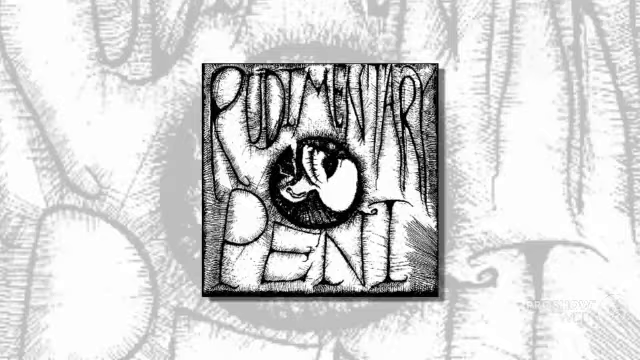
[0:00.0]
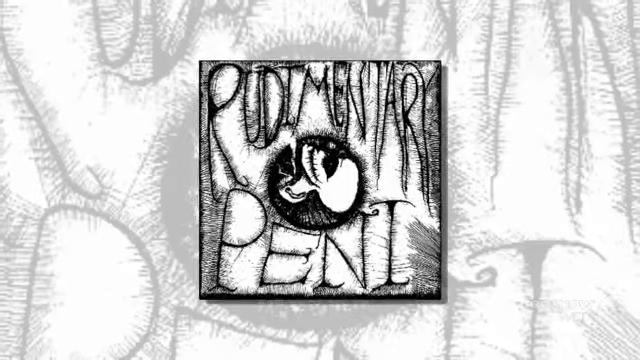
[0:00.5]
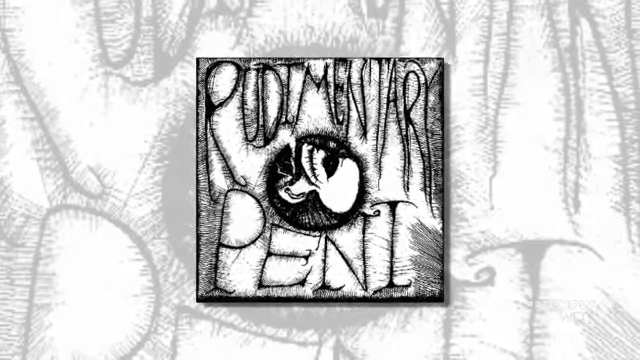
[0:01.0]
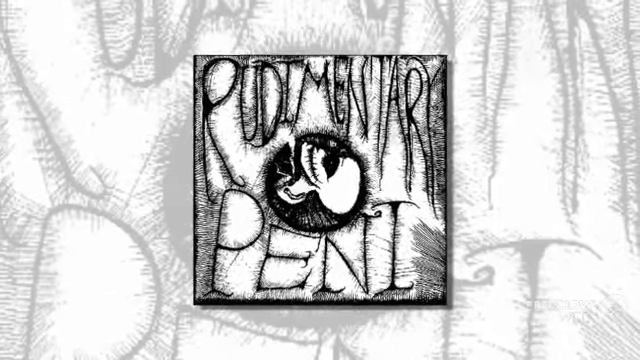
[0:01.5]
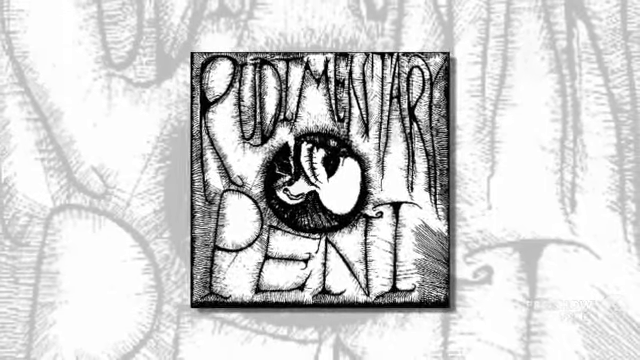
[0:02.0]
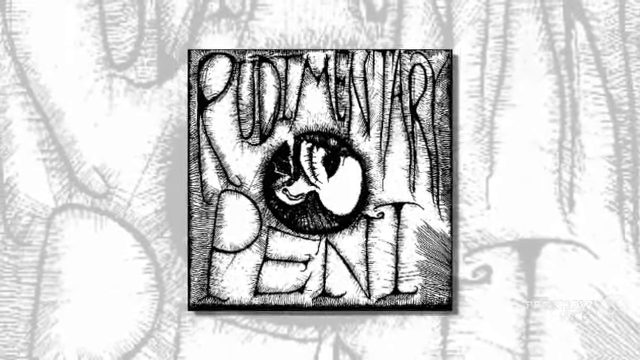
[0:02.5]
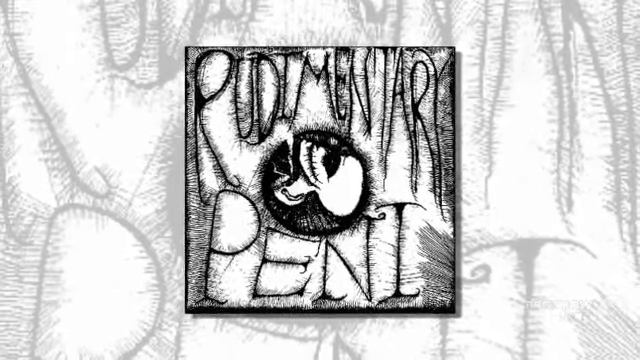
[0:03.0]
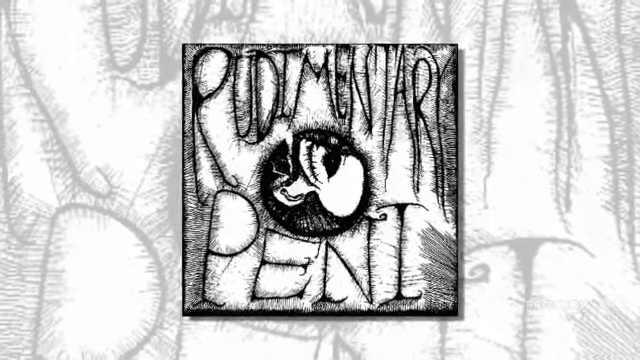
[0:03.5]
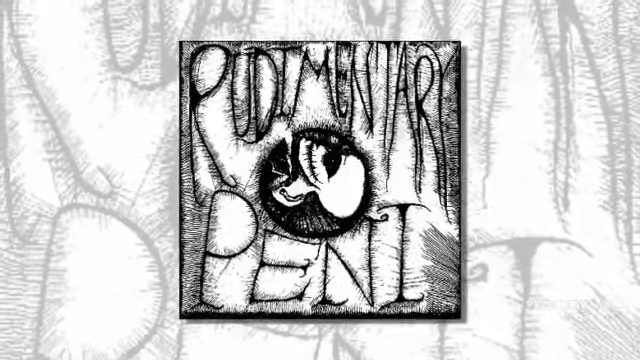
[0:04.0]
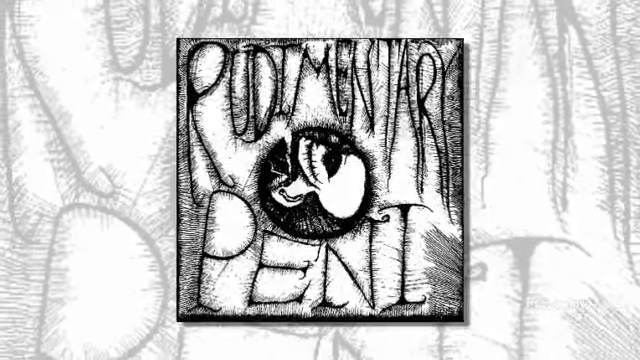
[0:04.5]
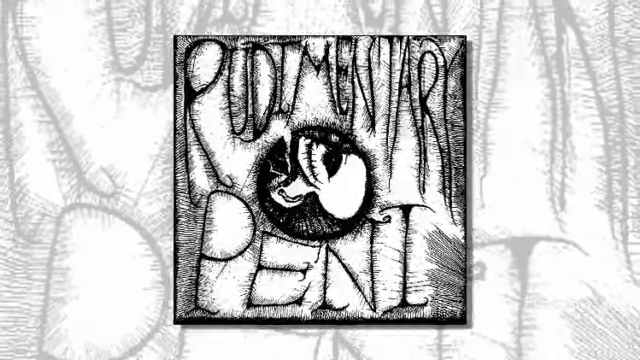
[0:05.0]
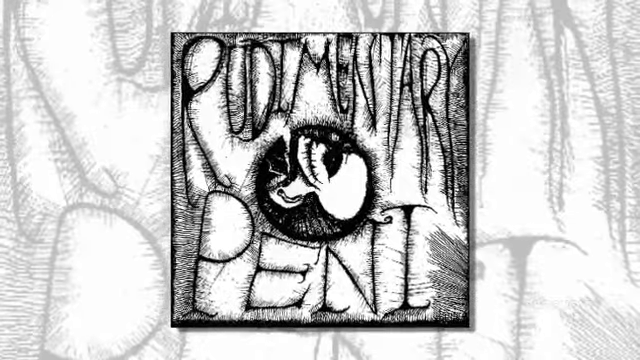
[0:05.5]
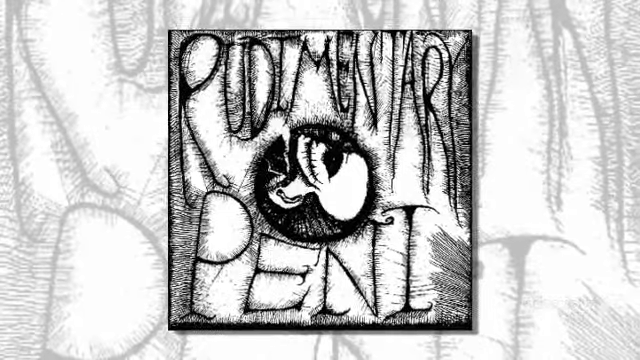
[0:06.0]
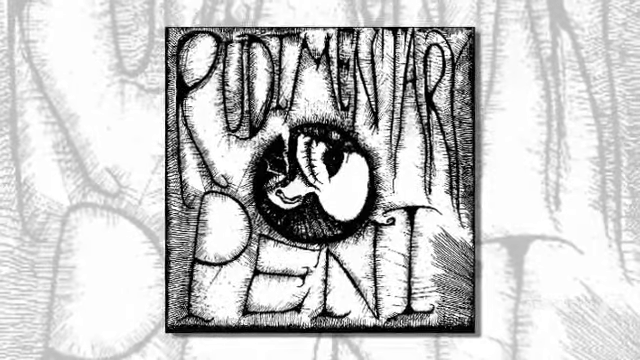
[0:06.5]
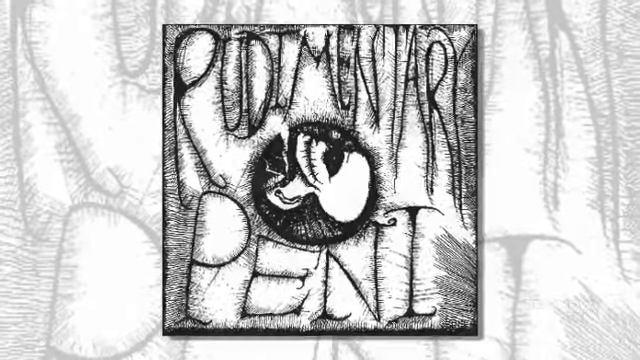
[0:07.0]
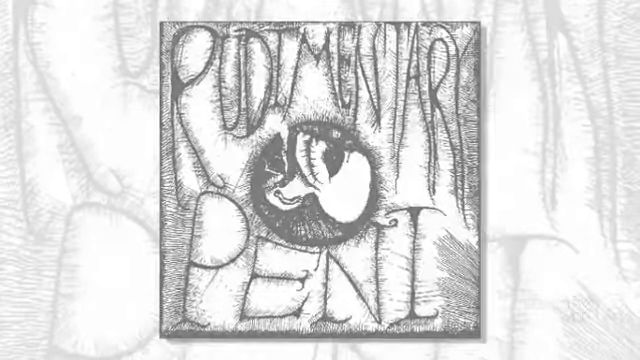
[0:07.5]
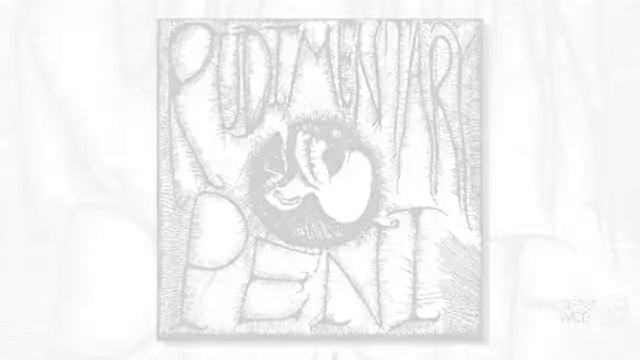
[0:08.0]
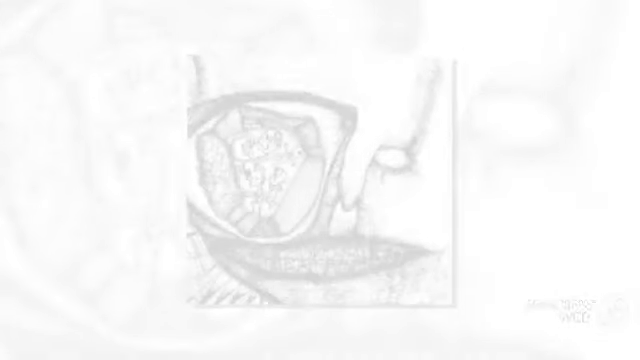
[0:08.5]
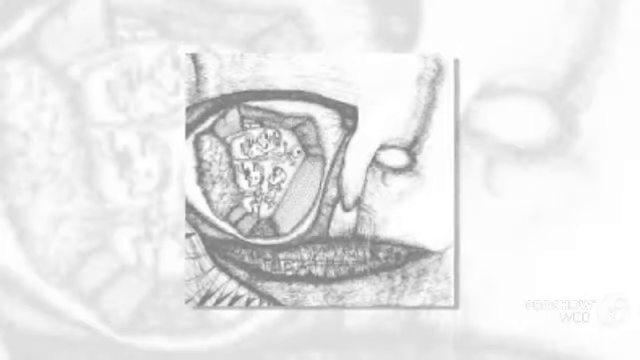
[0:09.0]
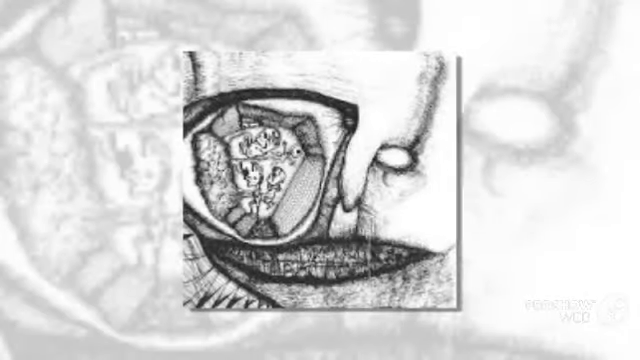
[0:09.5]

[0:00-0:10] The video opens on what is either an album cover or some other square picture. It has two words, one at the top and one at the bottom, with a picture dividing them. The top word is the letters P-U-D-I-M-E-N-T-A-R, and the bottom word seems to say "Peni", so it is perhaps Italian or another language. The letters are written in a sort of spooky, horror style. The picture seems to show a skull facing upwards with its left side visible and stitches across its mouth; it looks like it is trying to speak, with the mouth either open or stitched up. The camera zooms in on the picture, and at the very end it switches to another picture.